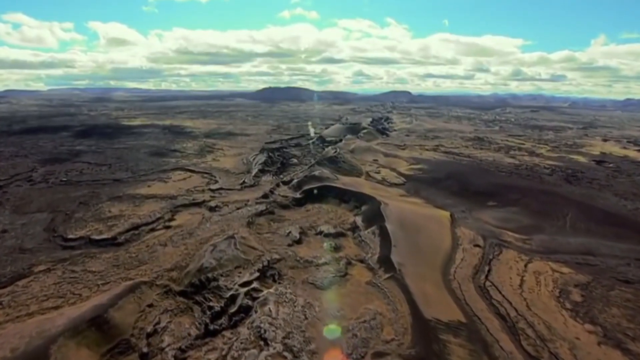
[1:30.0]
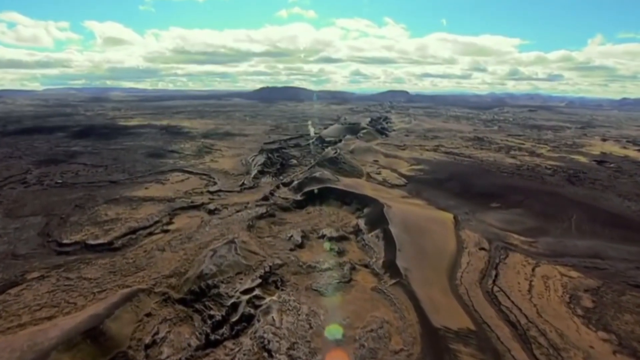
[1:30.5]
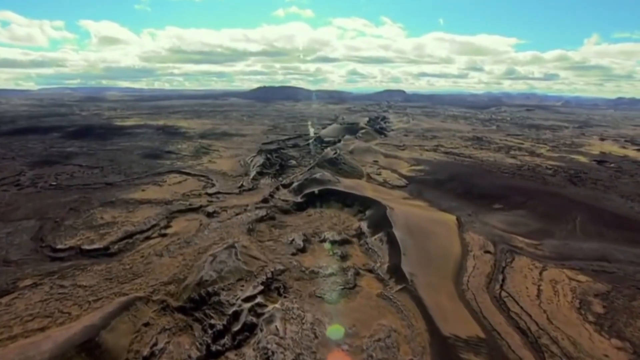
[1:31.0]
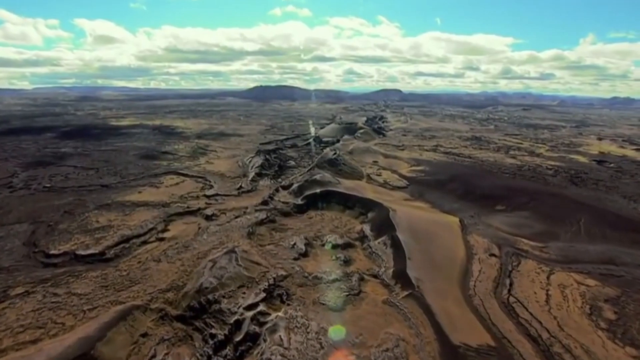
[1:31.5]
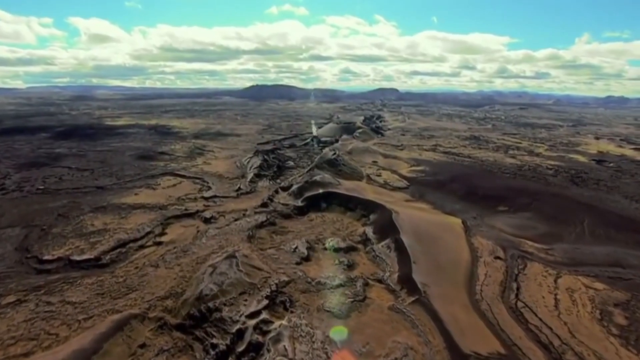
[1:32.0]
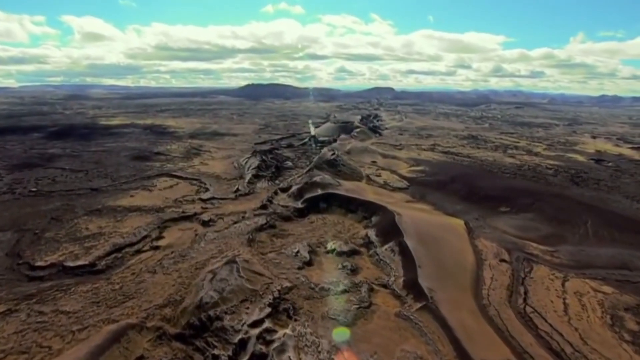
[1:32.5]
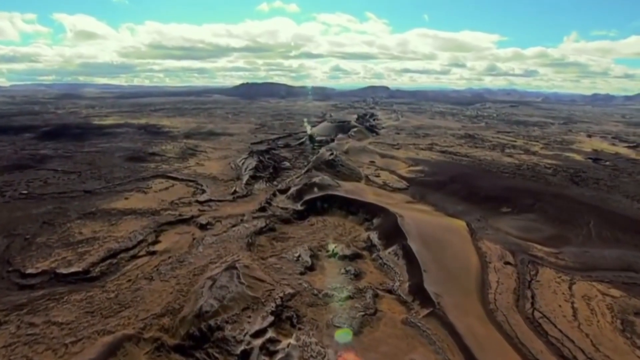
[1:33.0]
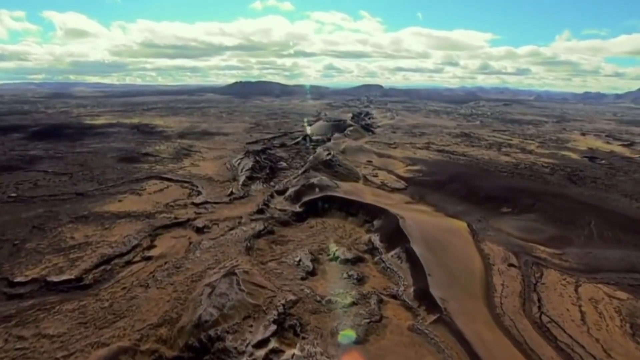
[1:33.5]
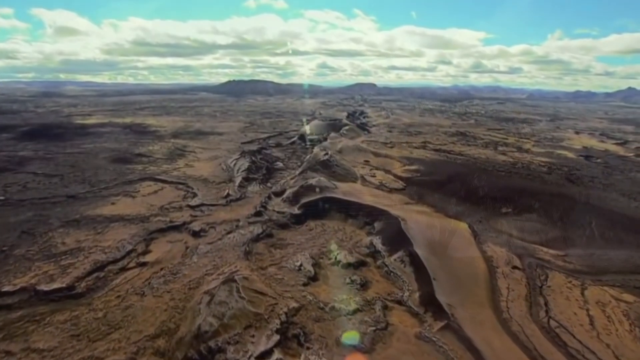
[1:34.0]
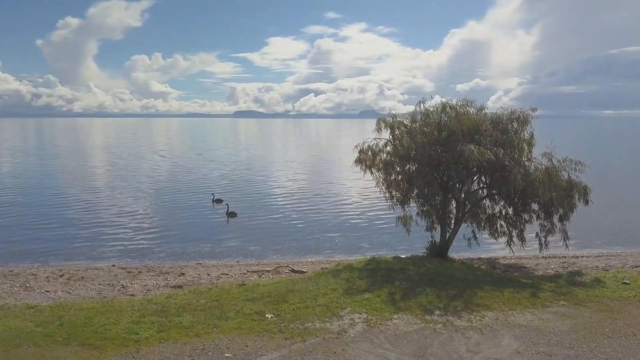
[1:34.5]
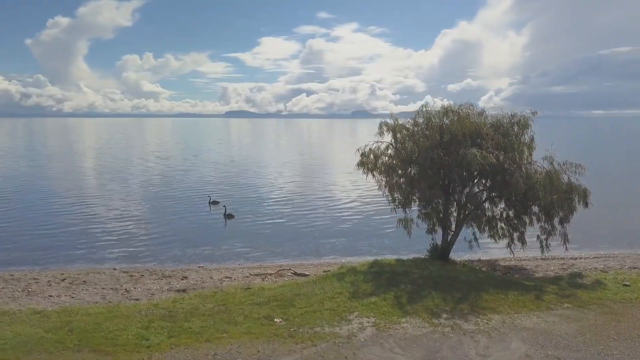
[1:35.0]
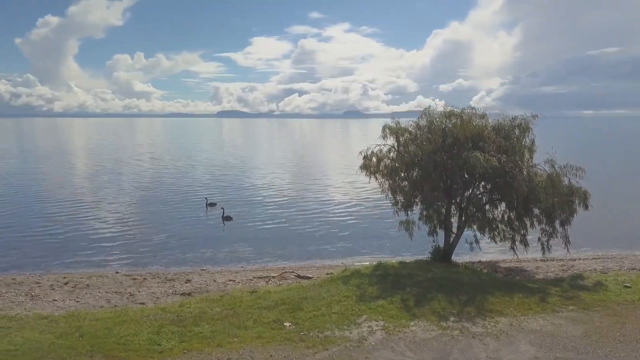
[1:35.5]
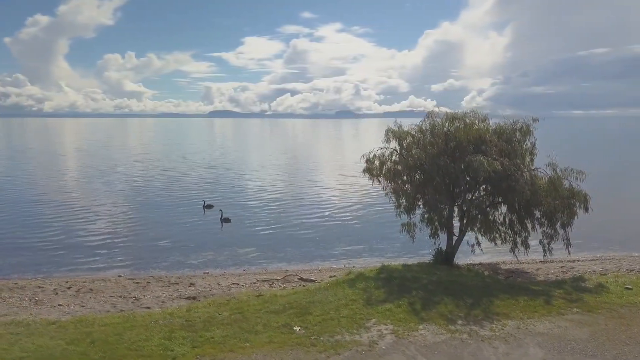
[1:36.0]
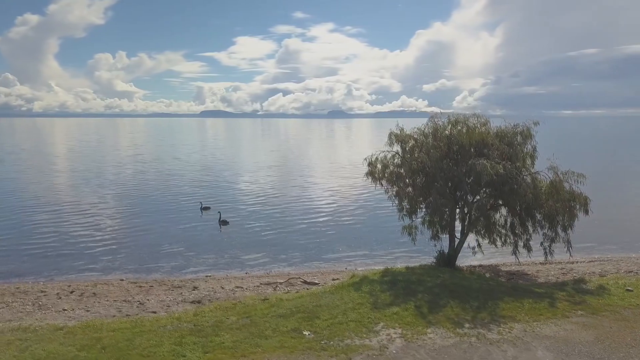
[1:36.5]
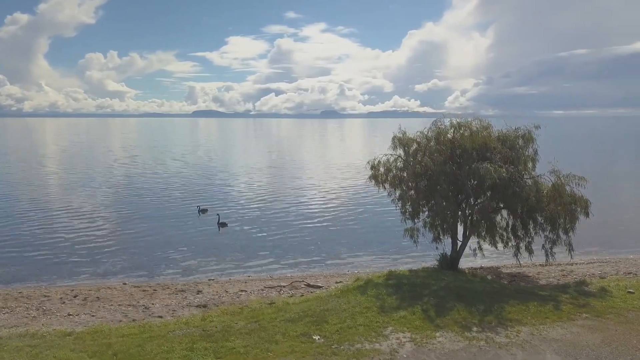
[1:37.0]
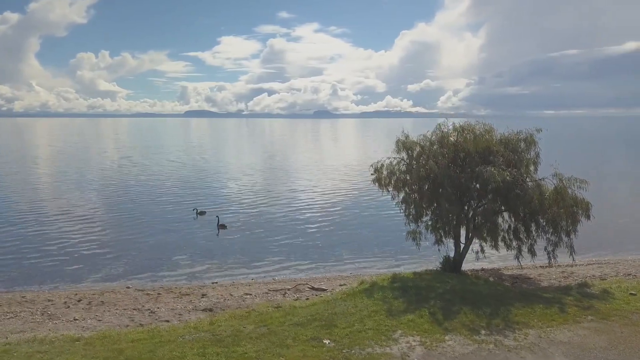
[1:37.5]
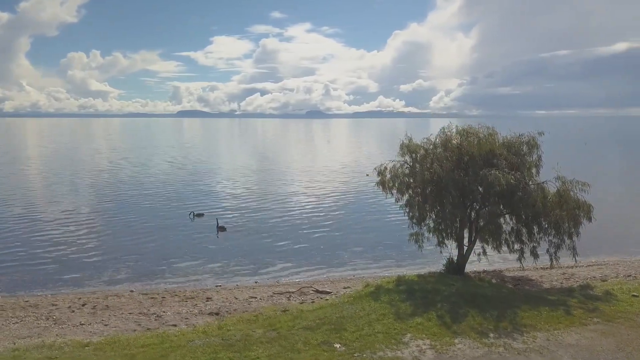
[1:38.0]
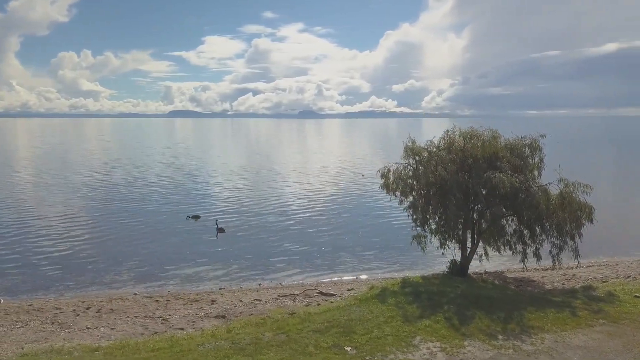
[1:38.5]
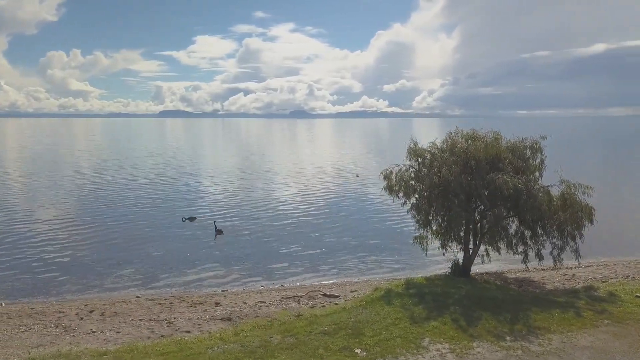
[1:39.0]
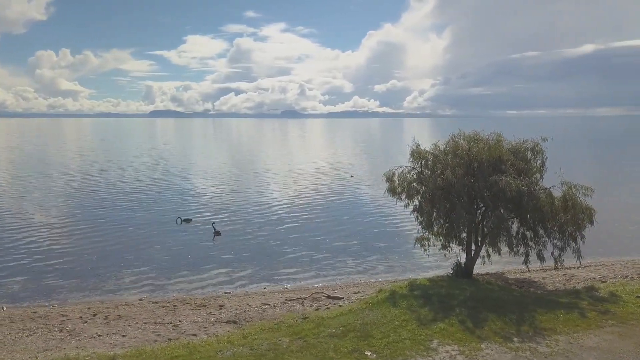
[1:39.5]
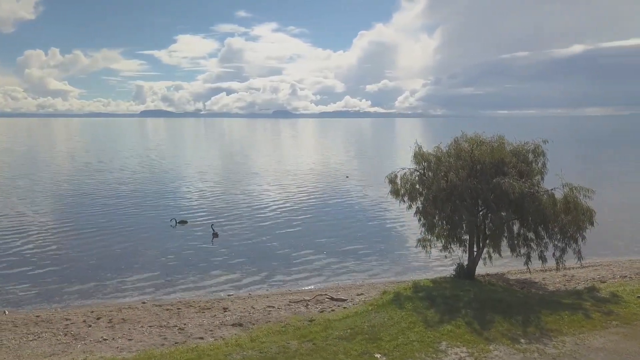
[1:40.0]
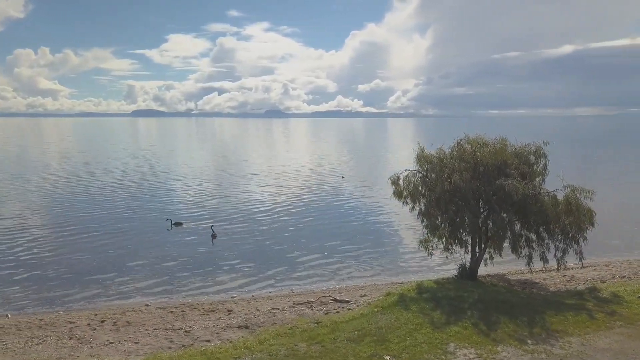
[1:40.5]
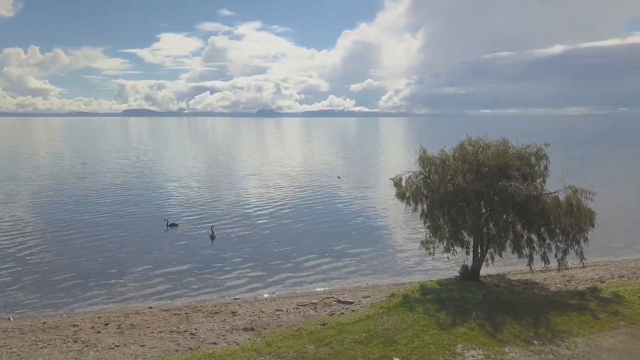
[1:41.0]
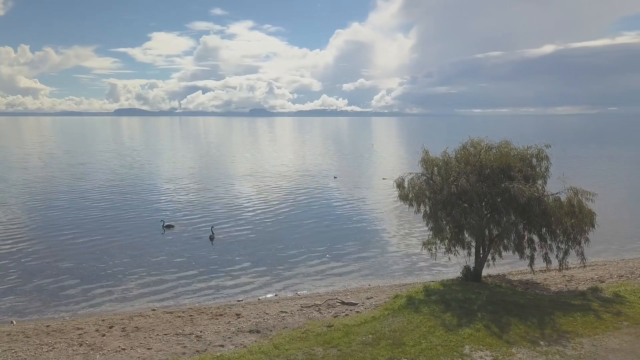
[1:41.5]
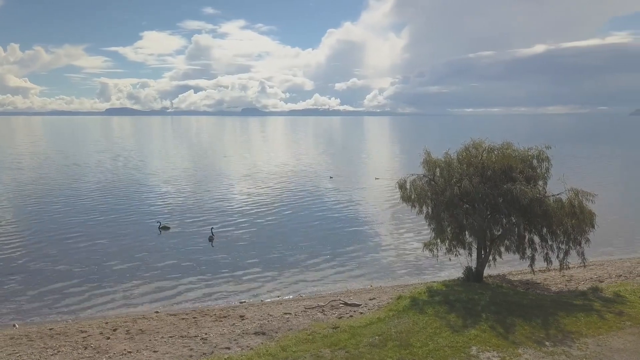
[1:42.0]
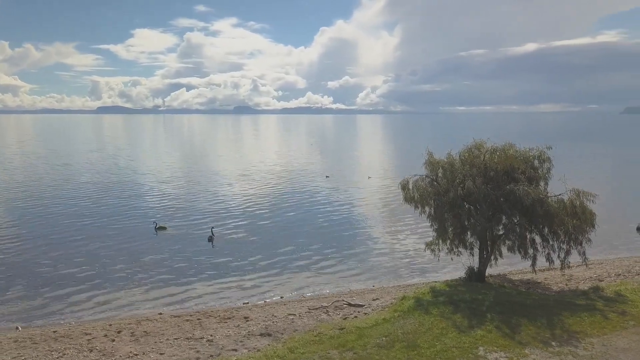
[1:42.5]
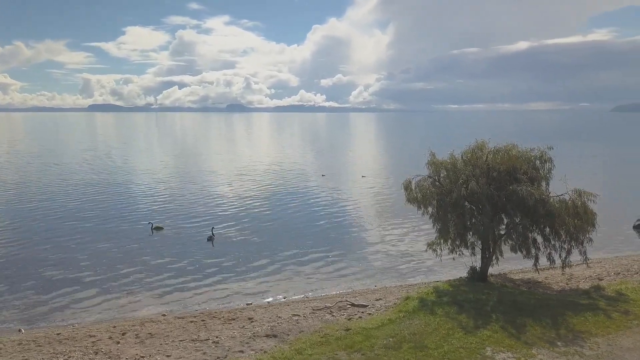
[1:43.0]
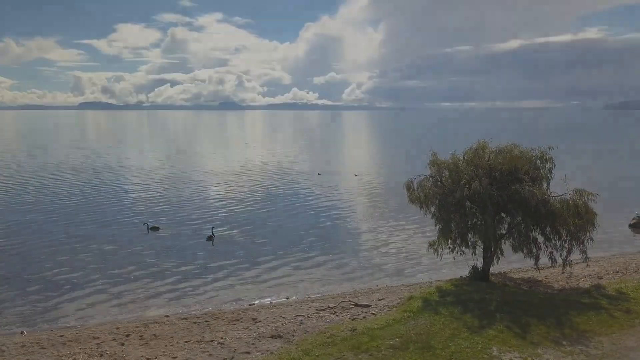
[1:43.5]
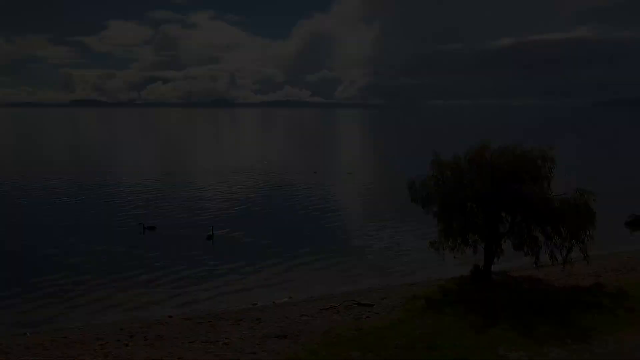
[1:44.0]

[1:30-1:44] A flyover of a volcanic cluster is shown again. The video then transitions to the same shot seen earlier of the camera overlooking the ocean, with a tree and a bush on the left-hand side. This time the wind seems to have picked up a little. A couple of what look to be geese or a swan swim together in the ocean. The water is being tossed up a little by the wind, and instead of the earlier completely flat, glassy surface, the ocean appears to be moving a little. The view looks back across the water at the volcano.